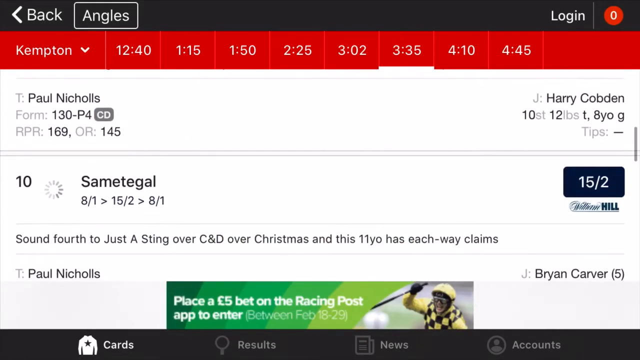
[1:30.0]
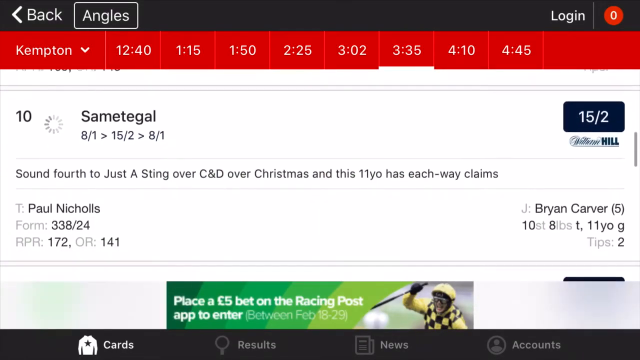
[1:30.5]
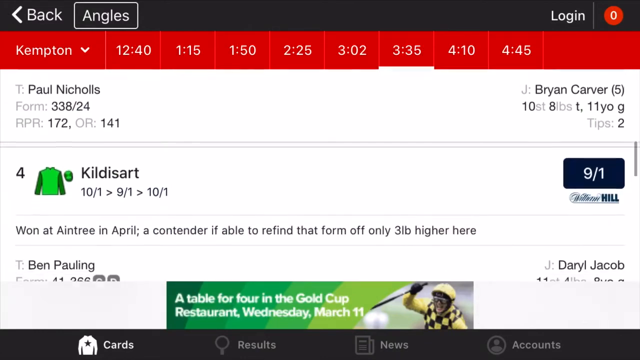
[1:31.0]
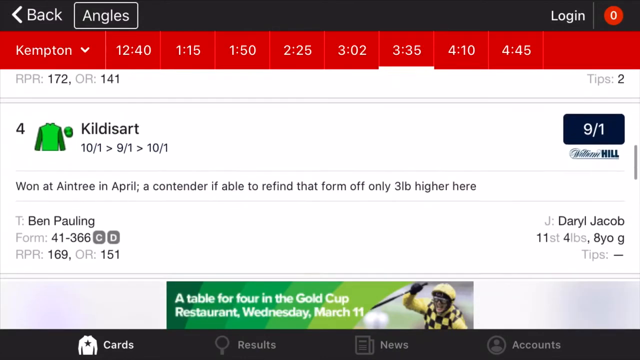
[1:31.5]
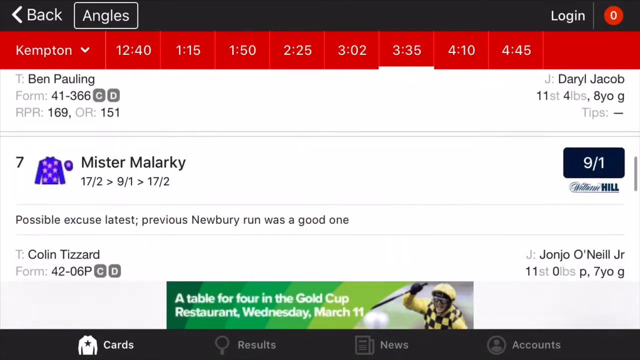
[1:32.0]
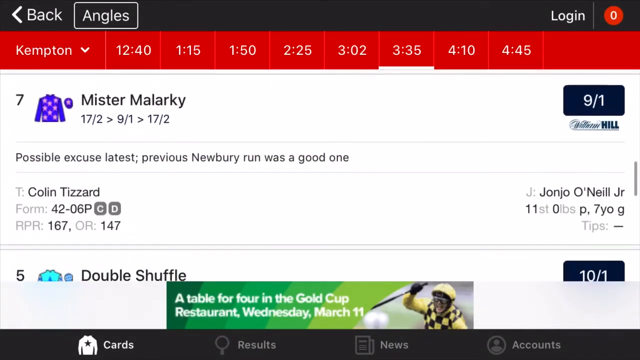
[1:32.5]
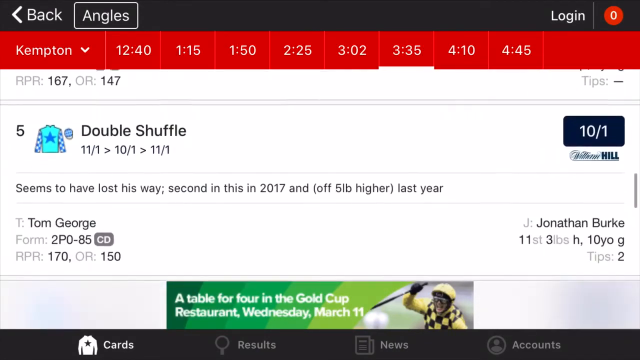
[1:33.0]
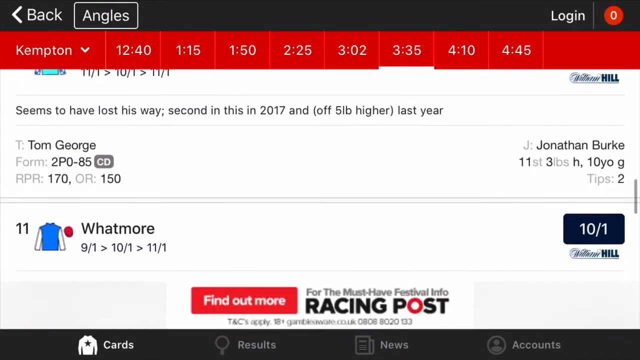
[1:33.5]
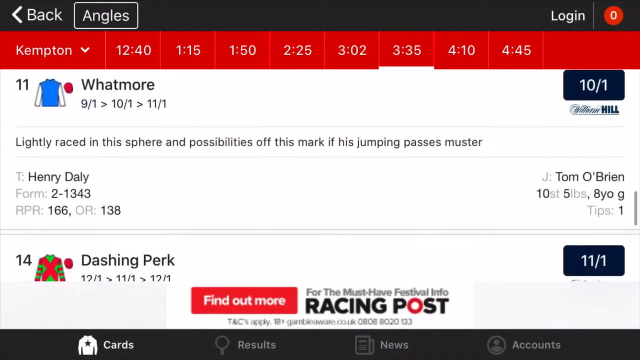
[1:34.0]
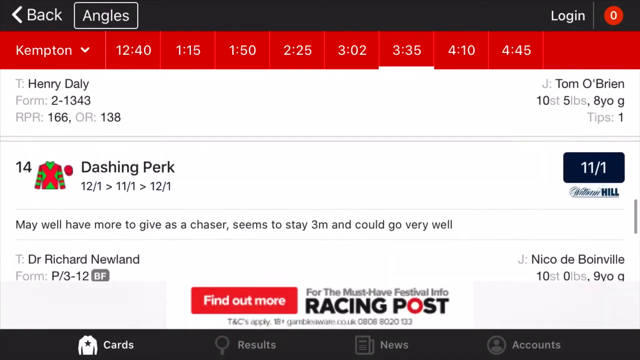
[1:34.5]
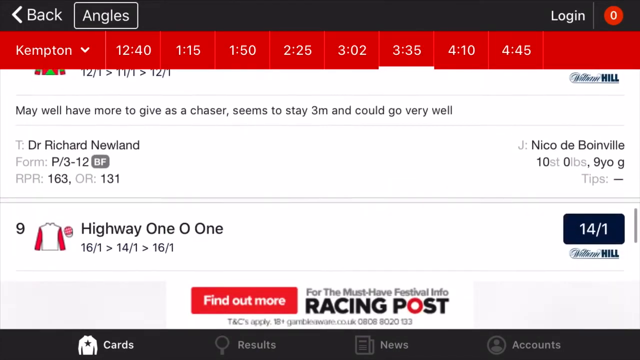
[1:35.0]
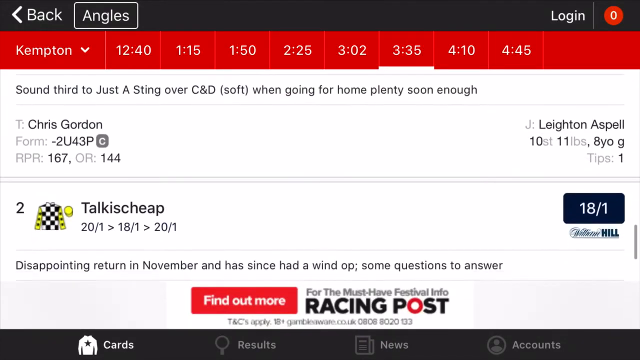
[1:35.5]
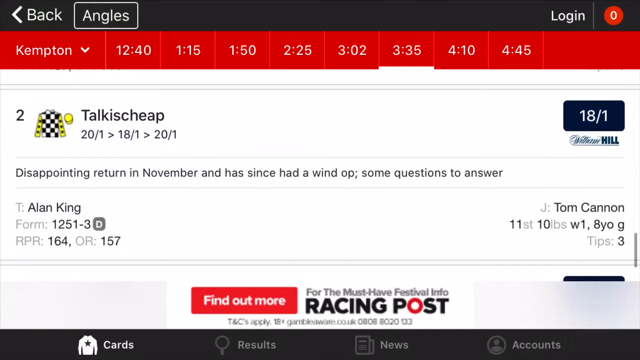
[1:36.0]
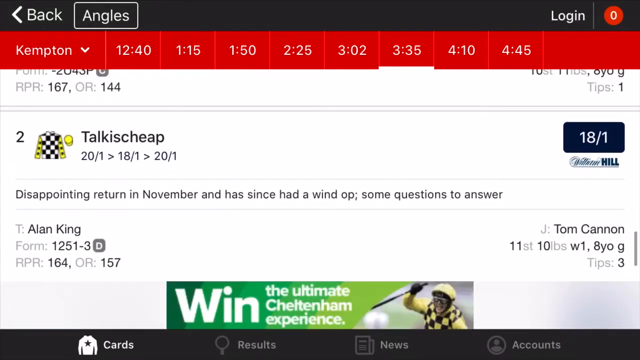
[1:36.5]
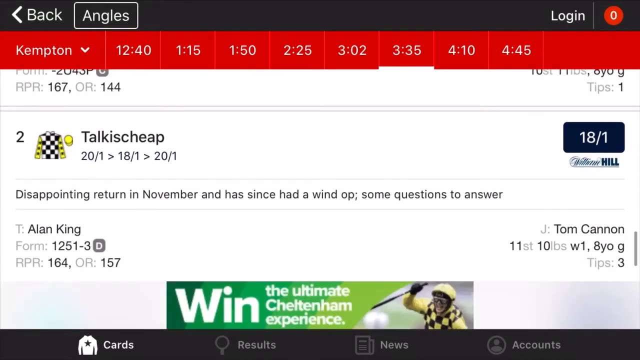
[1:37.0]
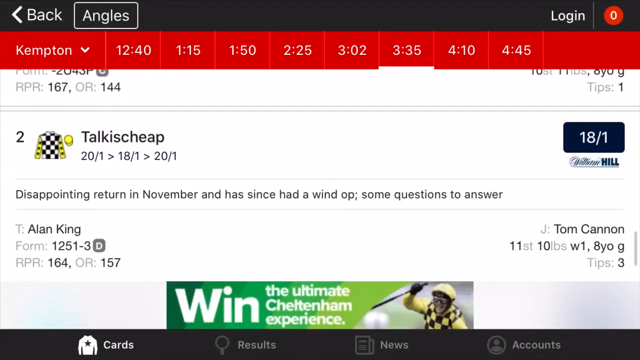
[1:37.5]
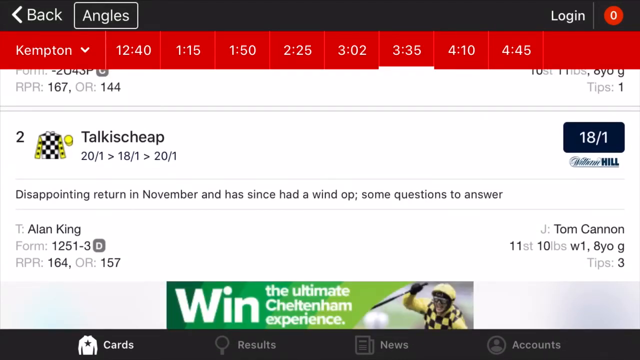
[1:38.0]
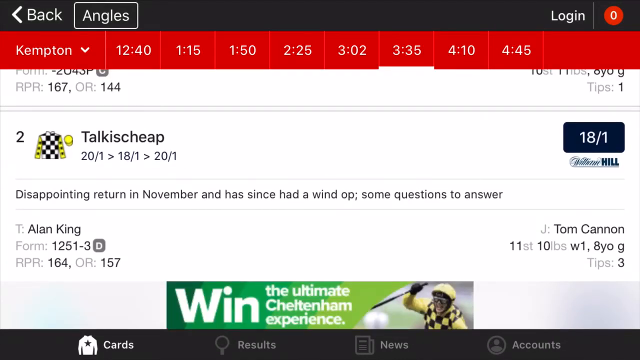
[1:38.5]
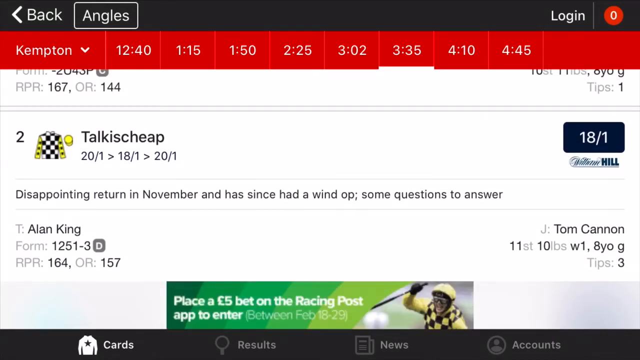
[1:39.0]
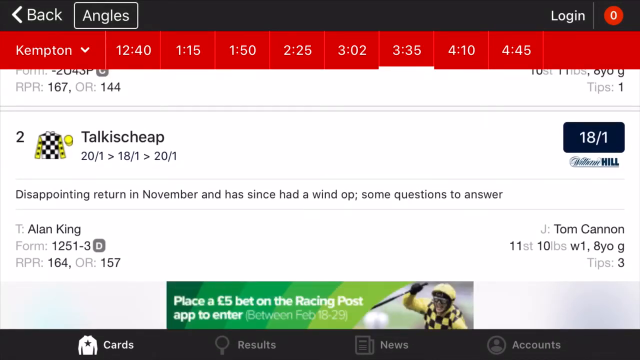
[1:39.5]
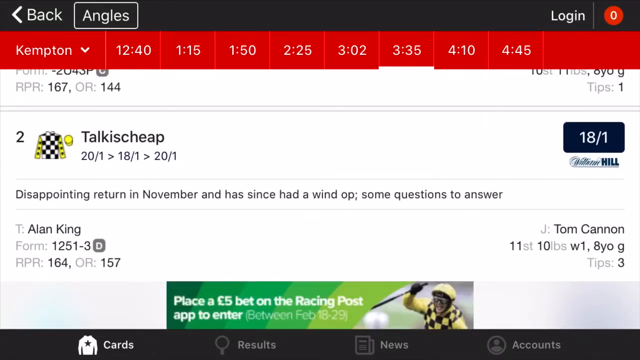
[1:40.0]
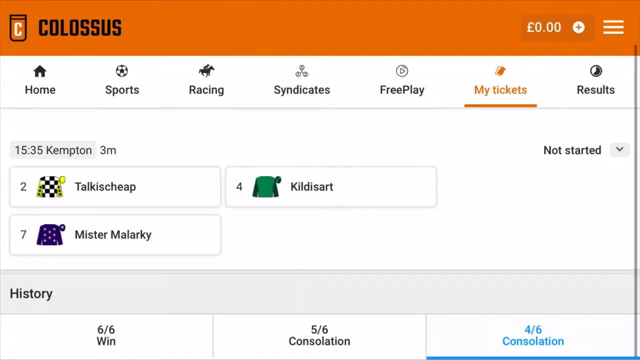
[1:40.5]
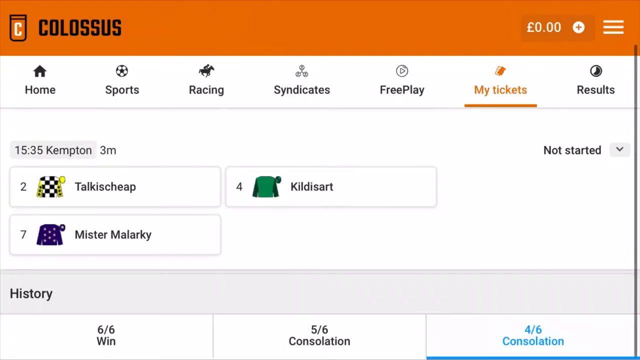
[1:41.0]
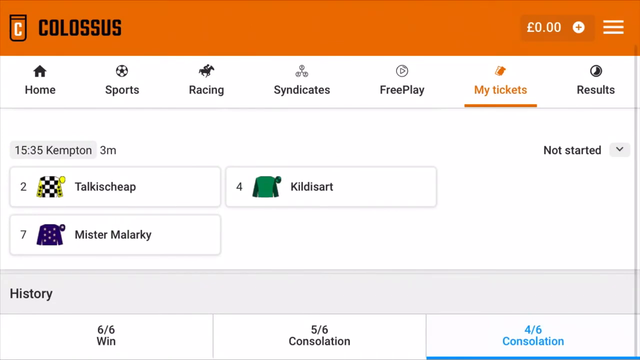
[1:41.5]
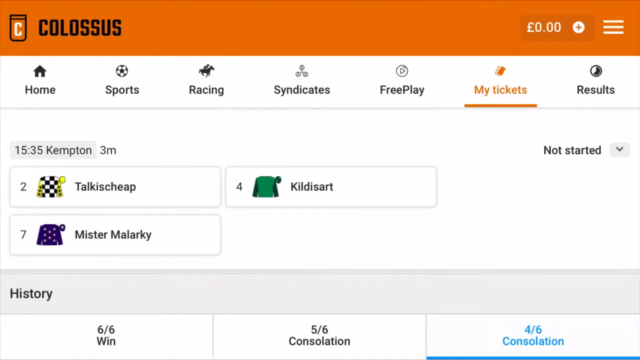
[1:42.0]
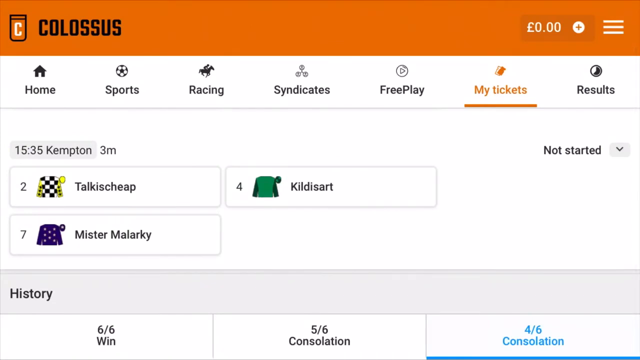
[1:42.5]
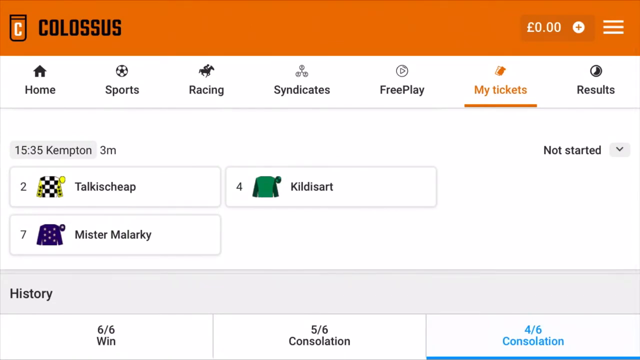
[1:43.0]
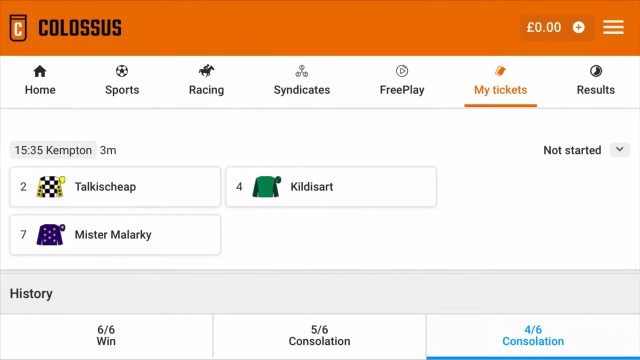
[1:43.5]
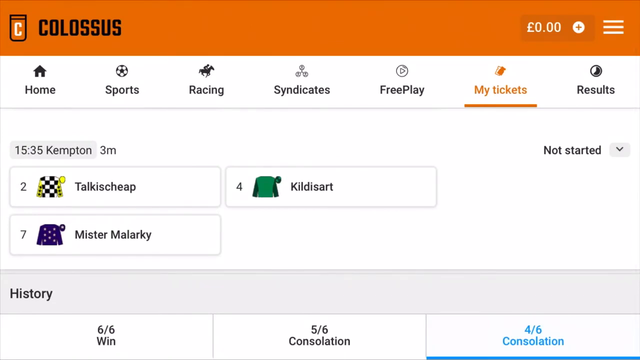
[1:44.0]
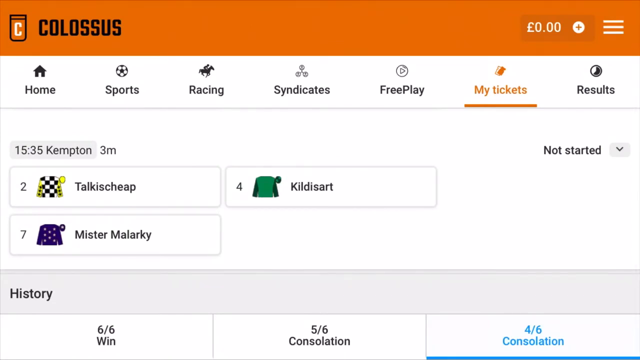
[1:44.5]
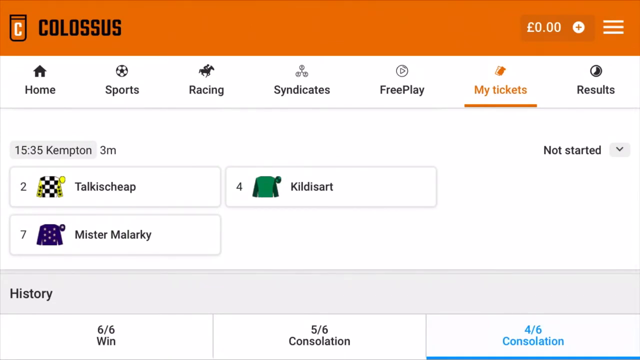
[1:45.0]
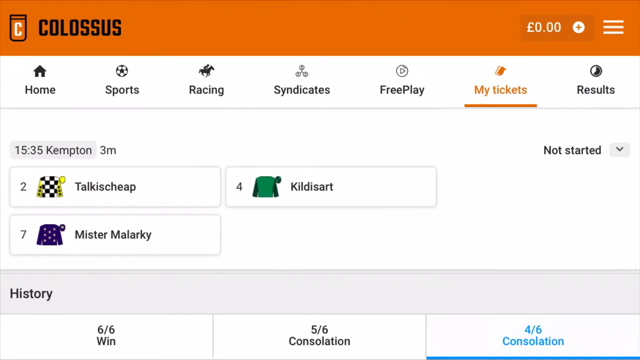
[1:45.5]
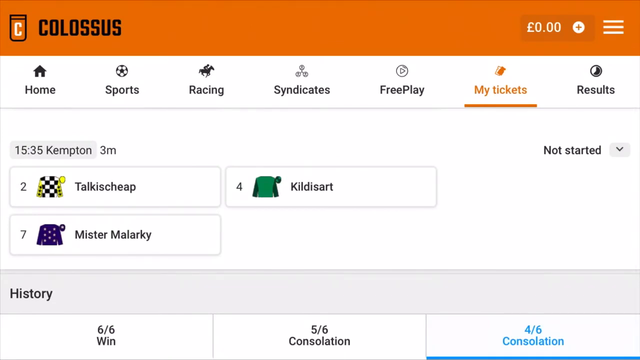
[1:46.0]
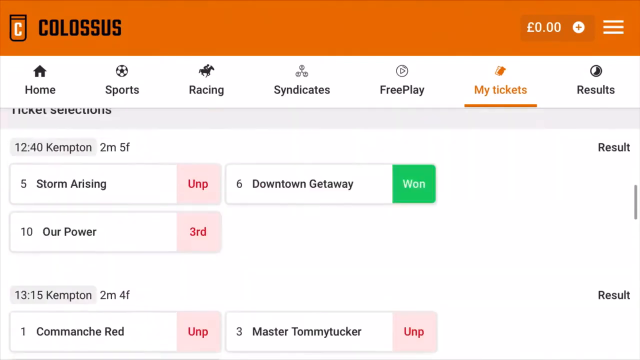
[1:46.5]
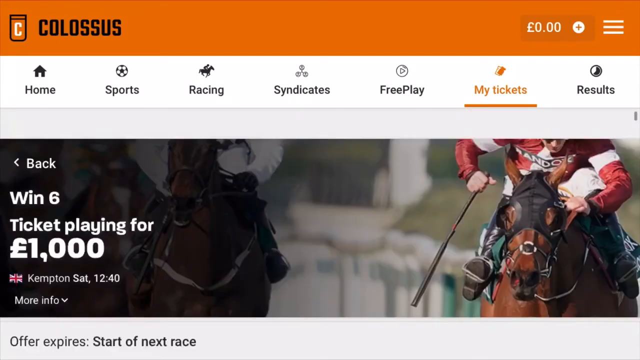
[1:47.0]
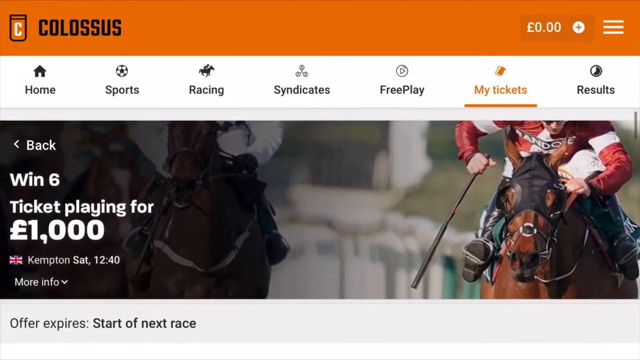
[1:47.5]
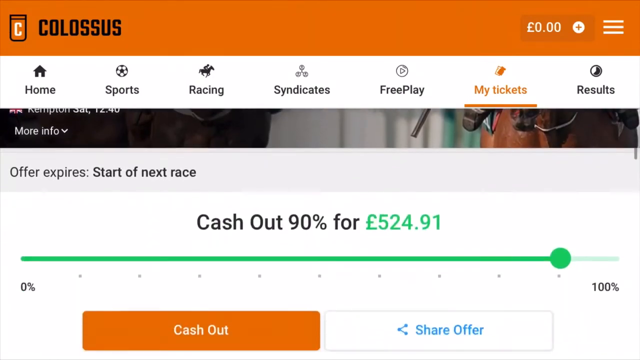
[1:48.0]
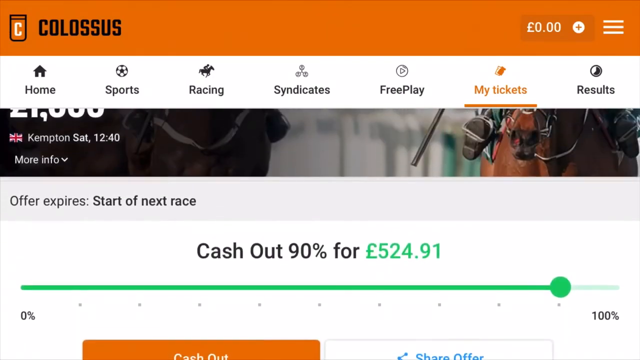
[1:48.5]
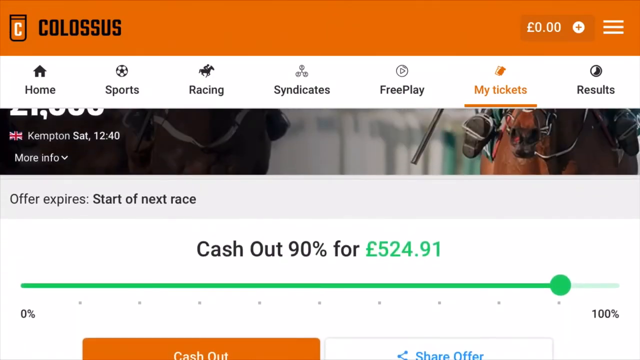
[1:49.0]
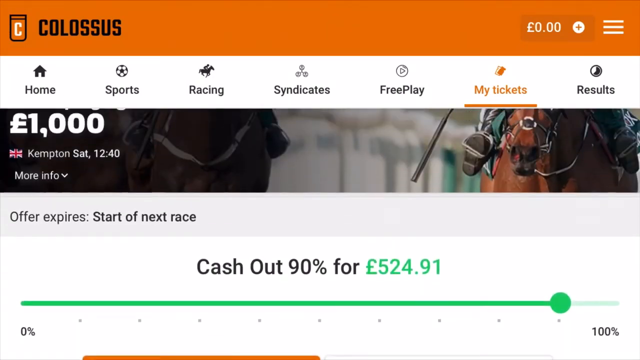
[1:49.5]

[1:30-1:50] A screen says "Kempton" in red at the top and scrolls very, very fast. At the bottom it says "find out if you won" and, in green, "win the ultimate Cheltenham". A picture shows a person holding something long, with "find out more" for the racing. A menu shows options for home, sports, racing, syndicates, free play and tickets. It quickly goes to another page showing Paul Nichols and a whole bunch of numbers. A login sign is in the upper right-hand corner, along with a red zero with a white zero in the middle of it. "Harry Cobden" appears near the upper right portion, and a black box in the middle says "15/2".